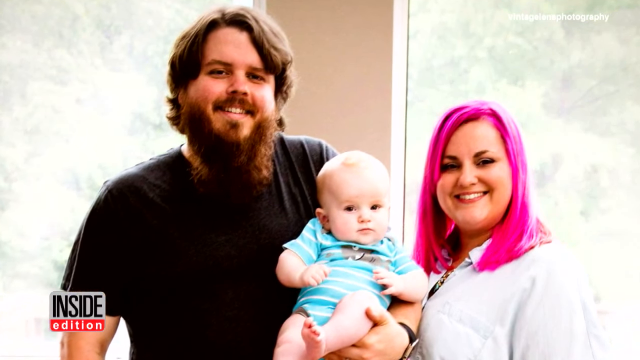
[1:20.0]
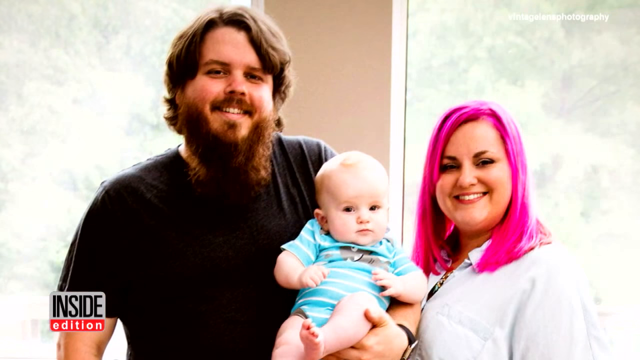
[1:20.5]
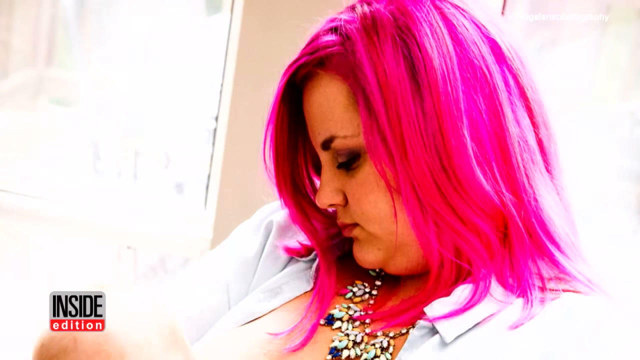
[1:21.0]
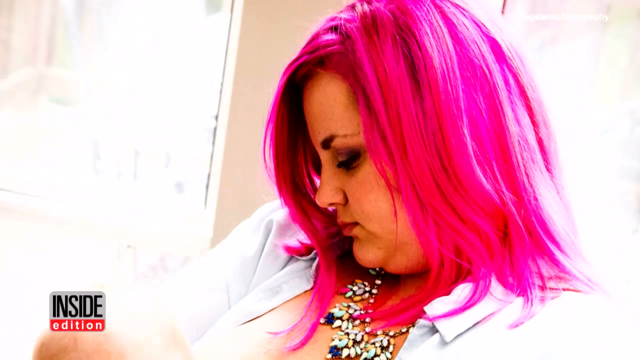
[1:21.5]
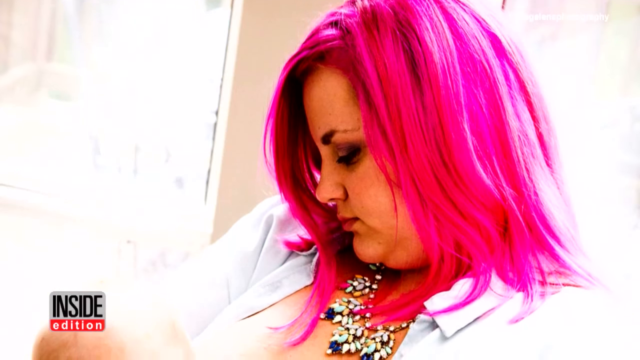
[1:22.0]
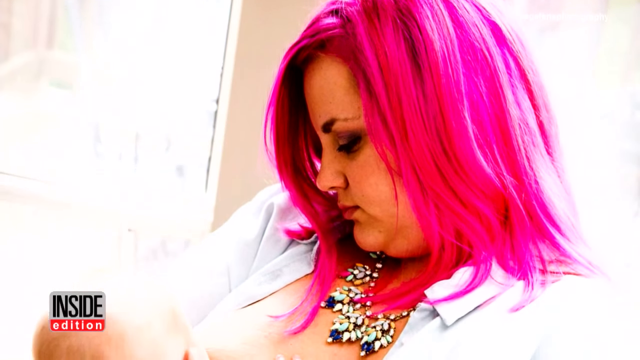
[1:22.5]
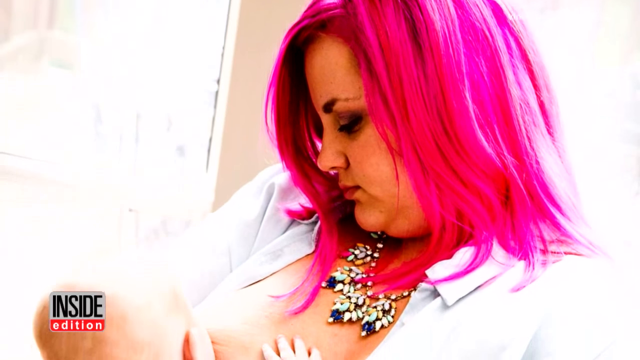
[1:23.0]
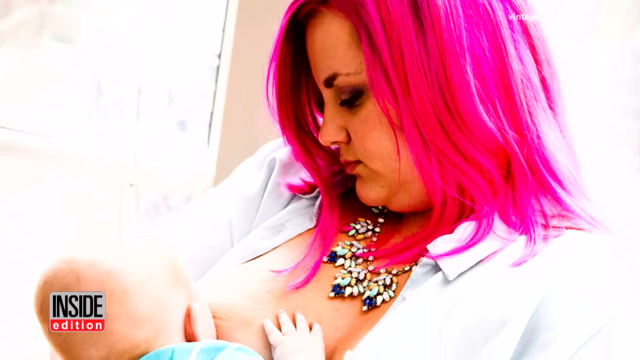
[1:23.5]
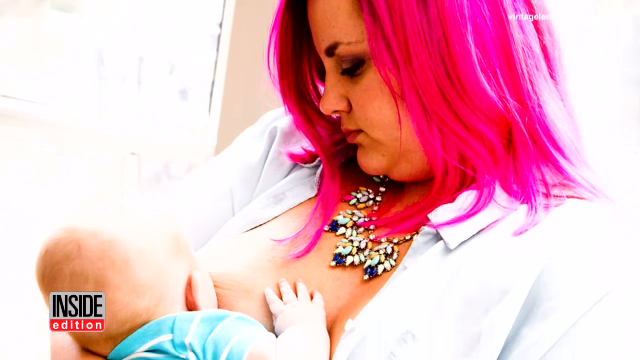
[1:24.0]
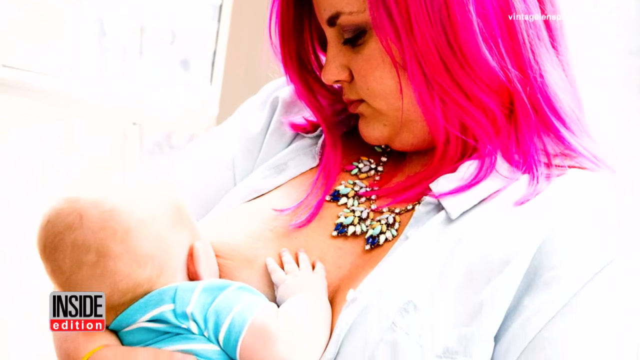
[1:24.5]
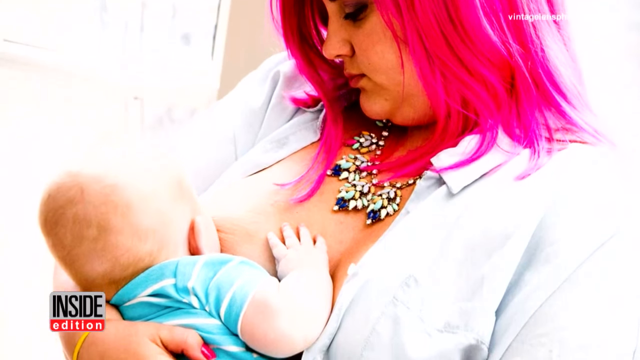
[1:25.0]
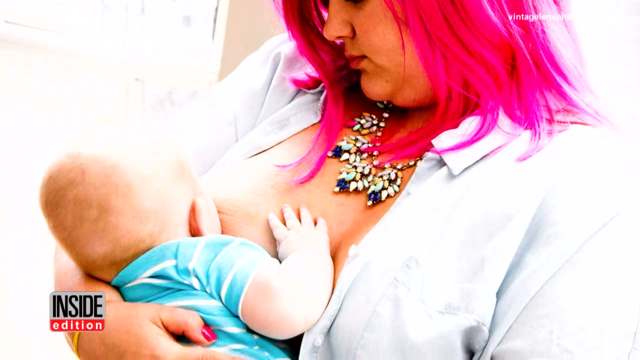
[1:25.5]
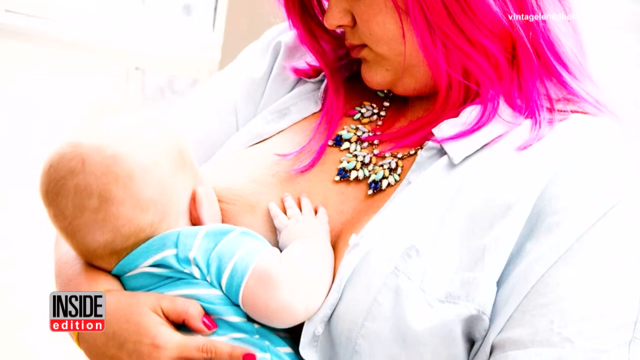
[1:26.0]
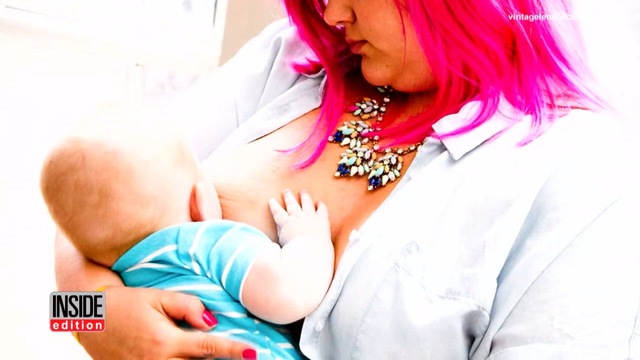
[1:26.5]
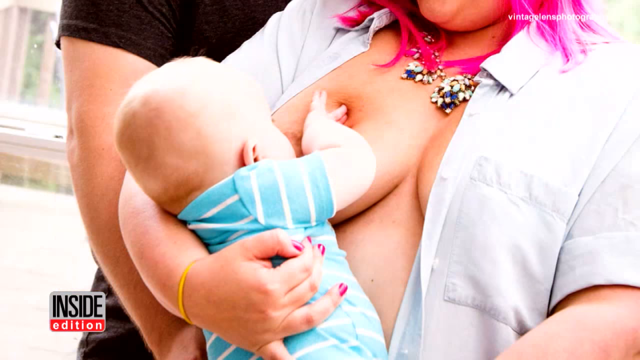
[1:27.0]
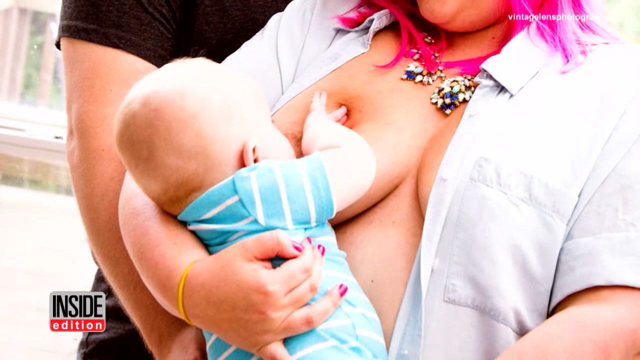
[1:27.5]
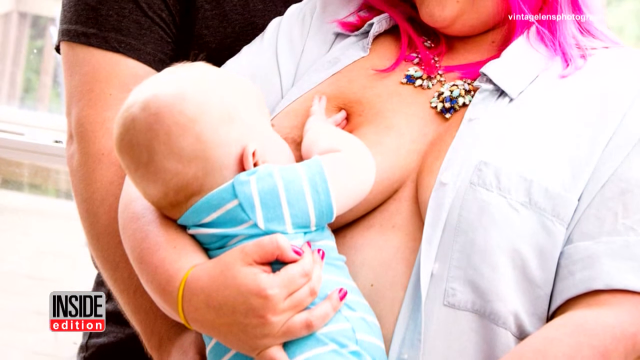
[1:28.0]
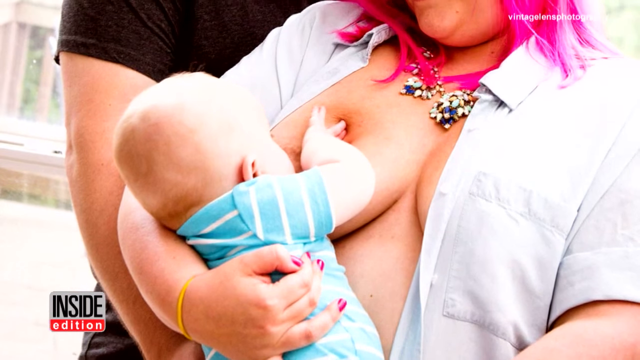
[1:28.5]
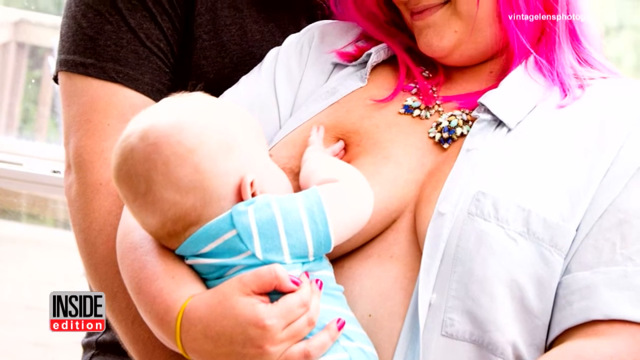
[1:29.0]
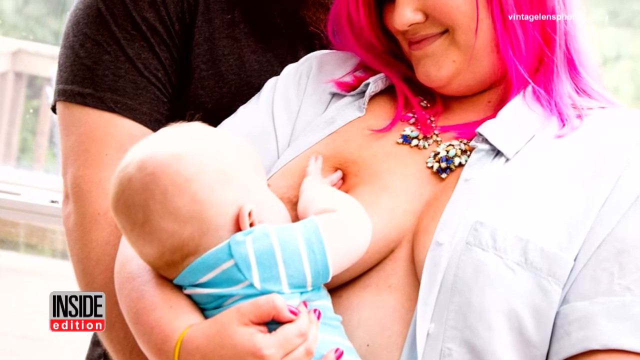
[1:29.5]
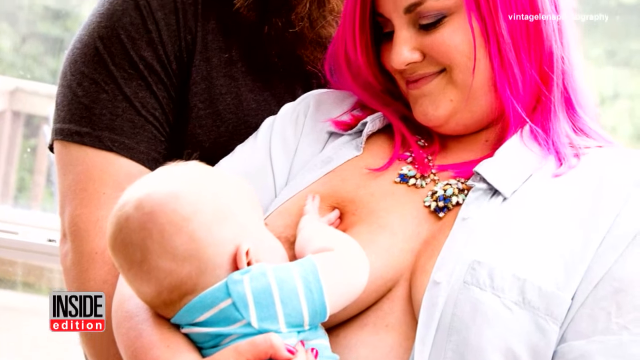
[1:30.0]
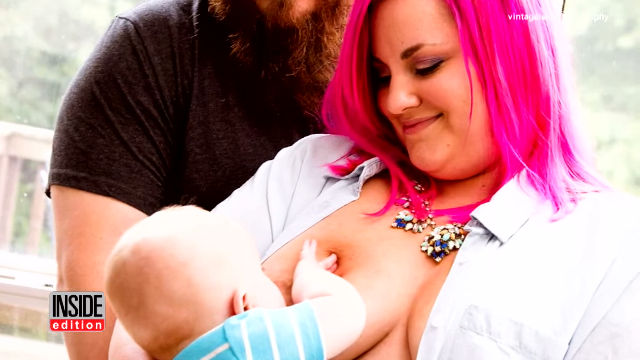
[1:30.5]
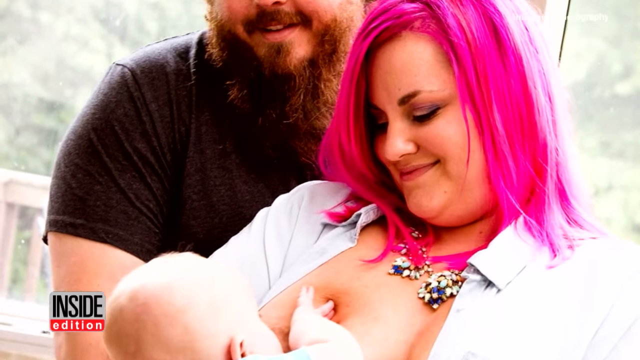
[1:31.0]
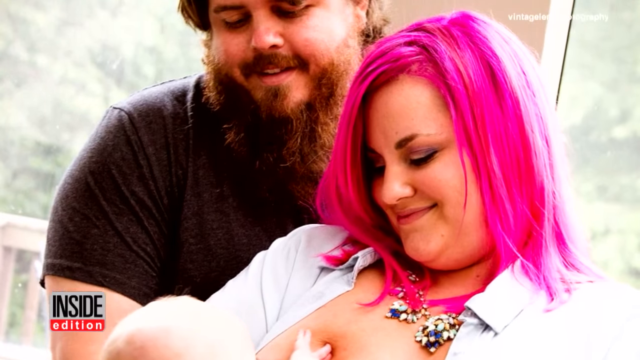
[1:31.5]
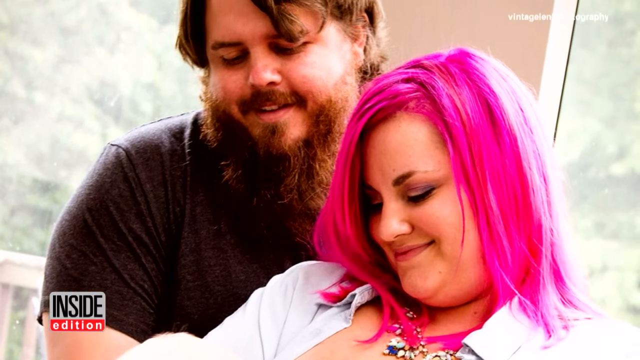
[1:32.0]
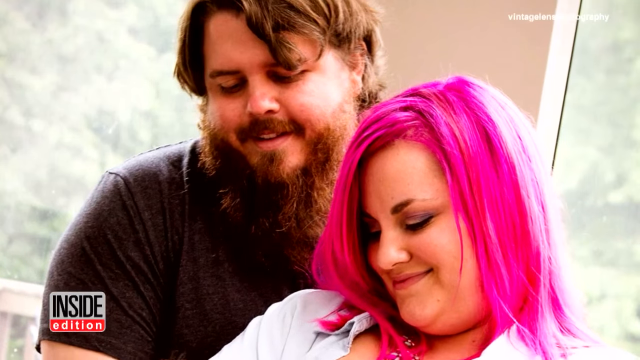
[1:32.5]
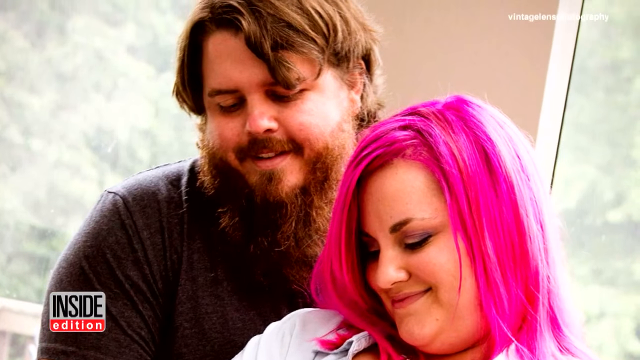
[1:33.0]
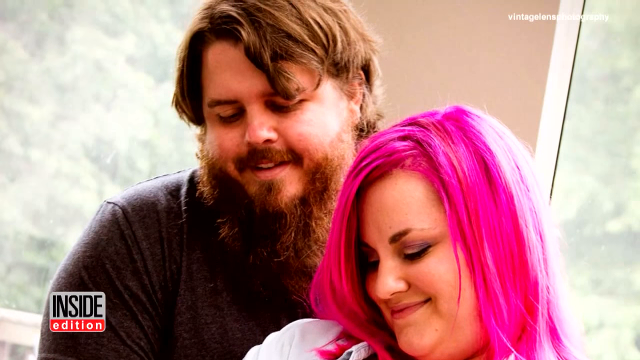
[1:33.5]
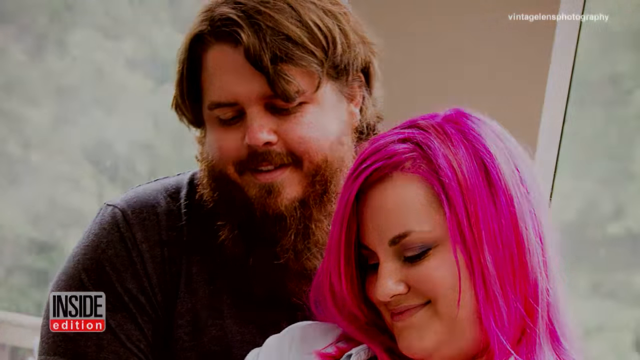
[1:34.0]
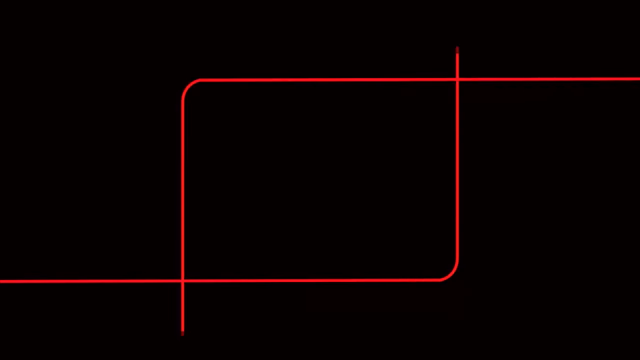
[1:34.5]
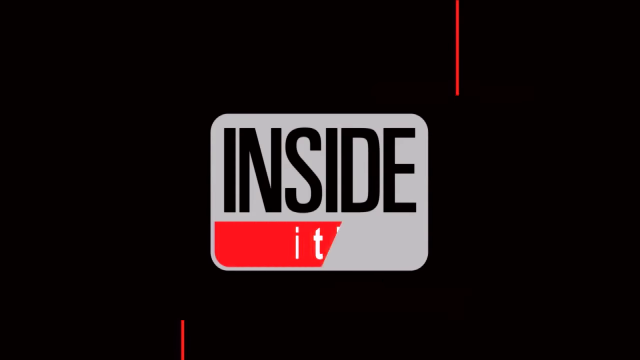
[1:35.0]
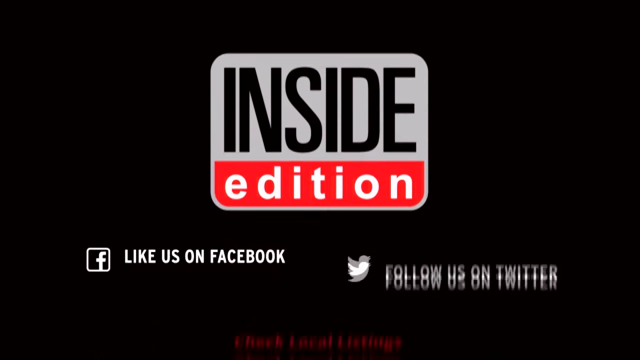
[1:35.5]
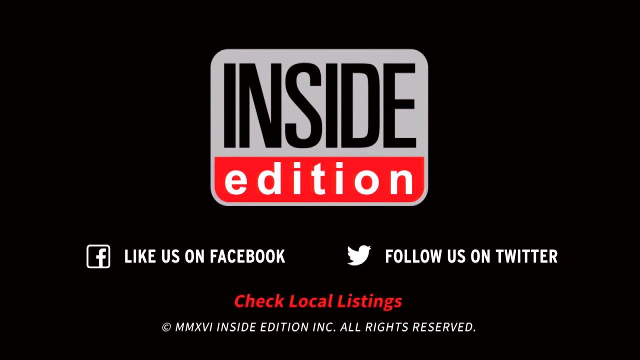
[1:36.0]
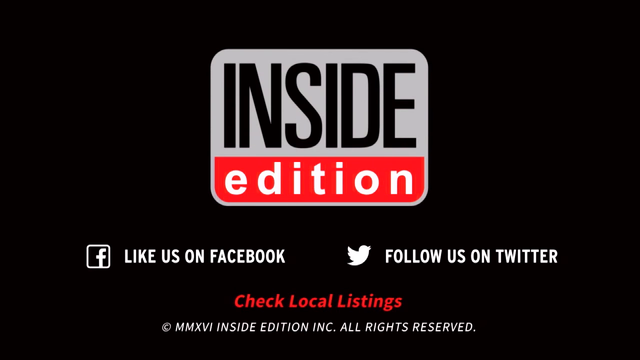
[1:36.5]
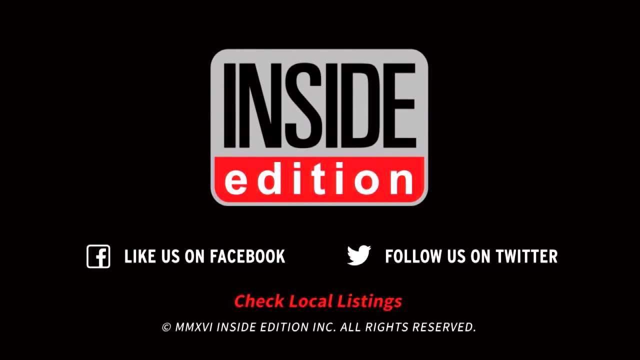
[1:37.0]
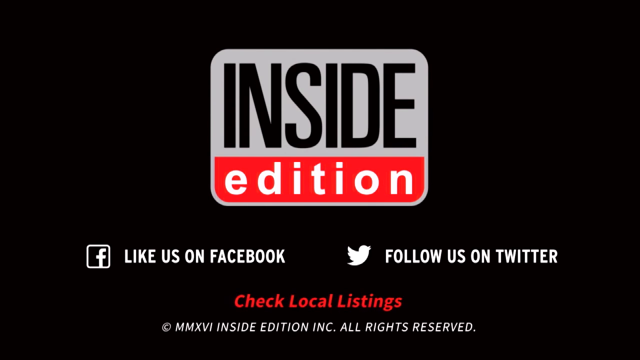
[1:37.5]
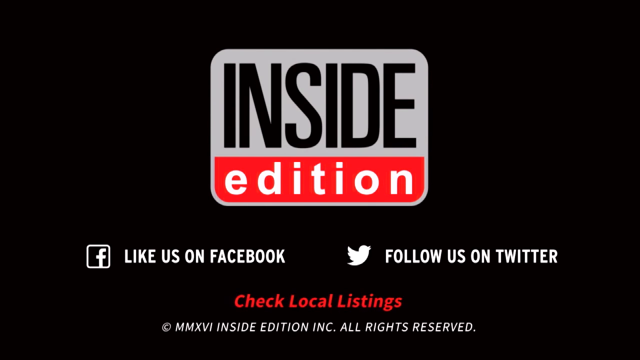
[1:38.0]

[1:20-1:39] The mom appears in various poses, breastfeeding the baby and looking down at the child with her husband. Some pictures of her are serious and some show her smiling; in one, the baby pokes the mom in the breast. They stand in front of a window with trees visible in the background, and a railing is visible, suggesting they may be on a balcony of some sort. The mom wears a very elaborate beaded necklace and has hot pink hair; the dad has a beard and long brownish hair. A black screen from Inside Edition then says you could like them on Facebook, follow them on Twitter and check local listings, along with a few other things shown very quickly. The Inside Edition insignia is in the lower left corner and the photographer credits are in the upper right.